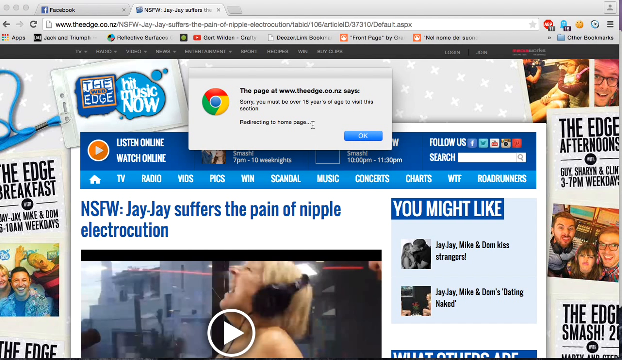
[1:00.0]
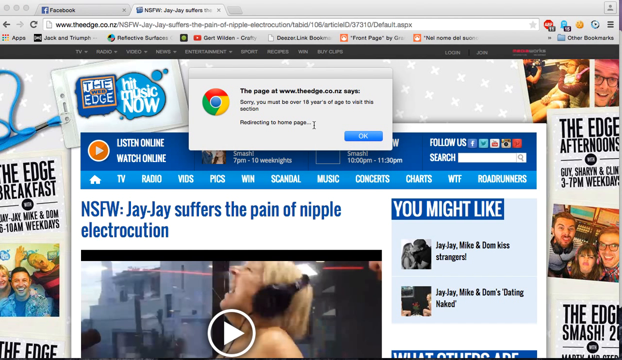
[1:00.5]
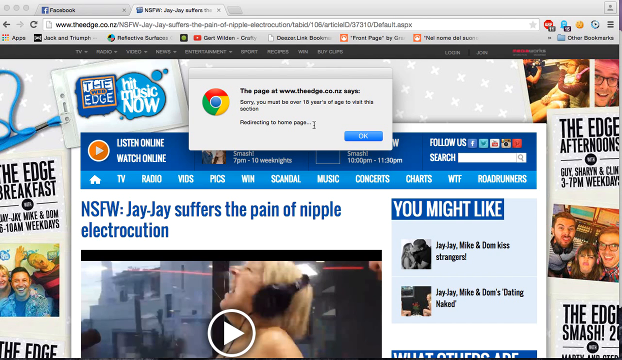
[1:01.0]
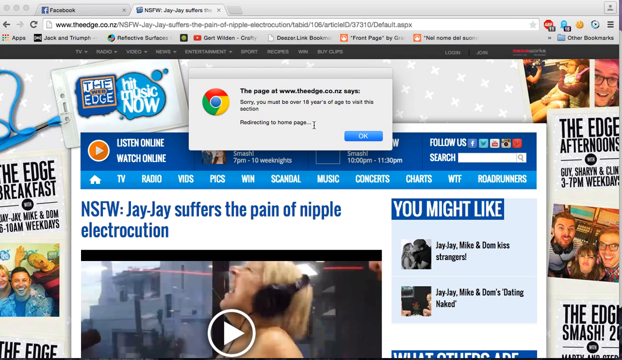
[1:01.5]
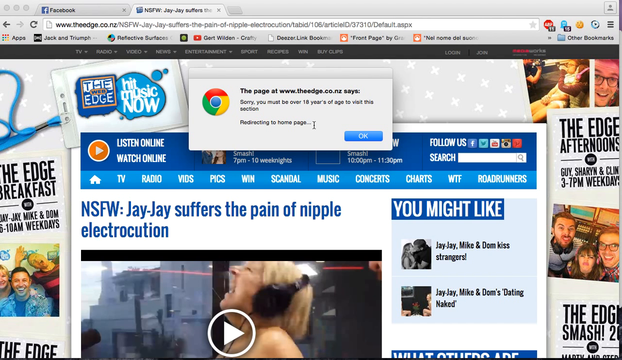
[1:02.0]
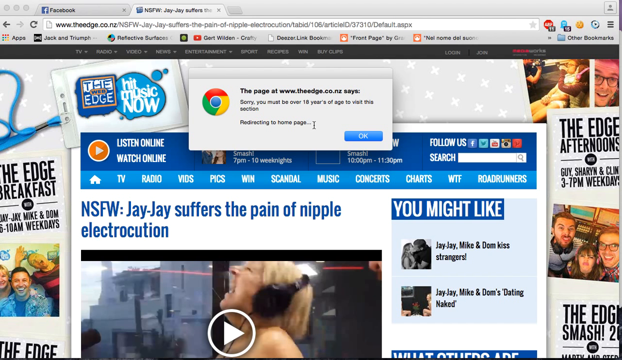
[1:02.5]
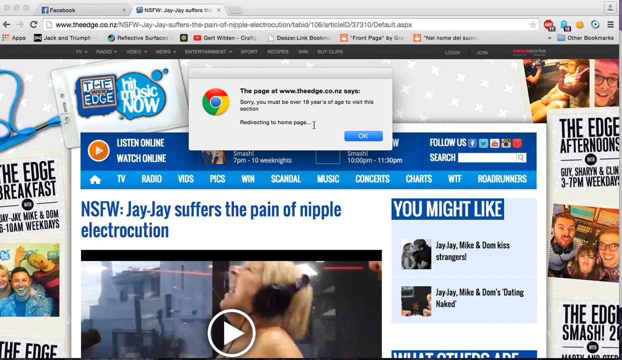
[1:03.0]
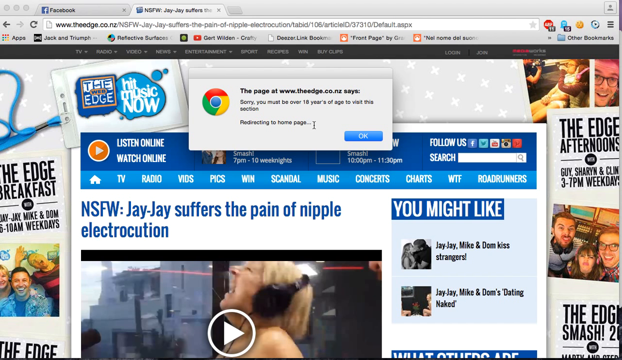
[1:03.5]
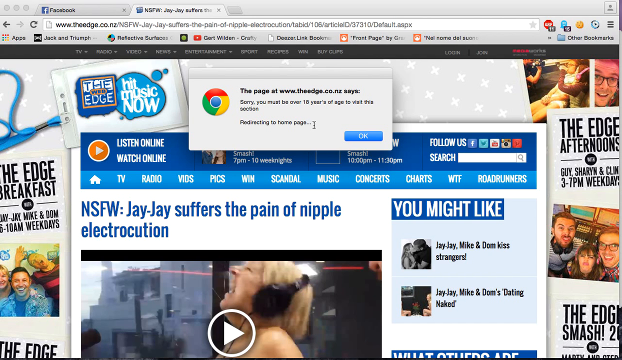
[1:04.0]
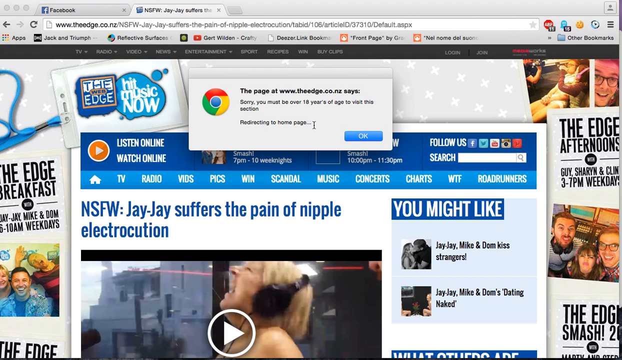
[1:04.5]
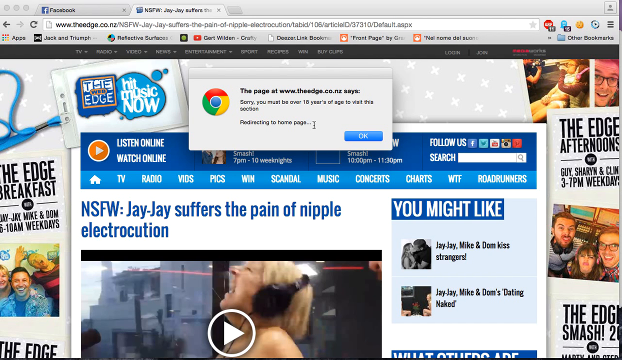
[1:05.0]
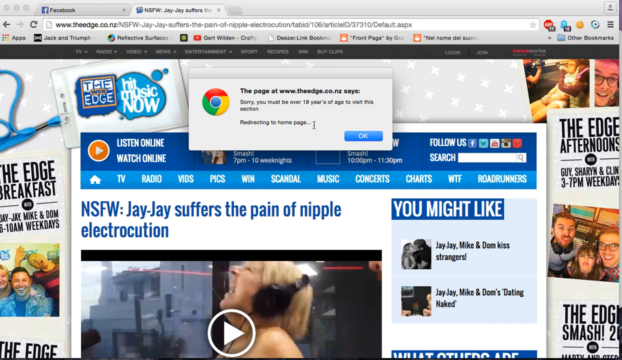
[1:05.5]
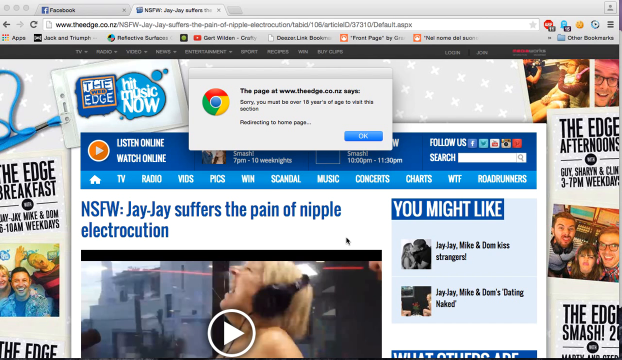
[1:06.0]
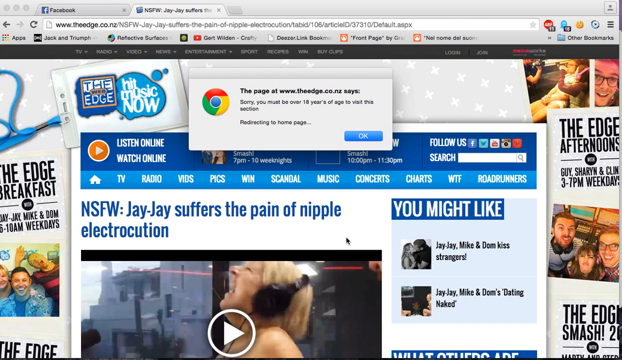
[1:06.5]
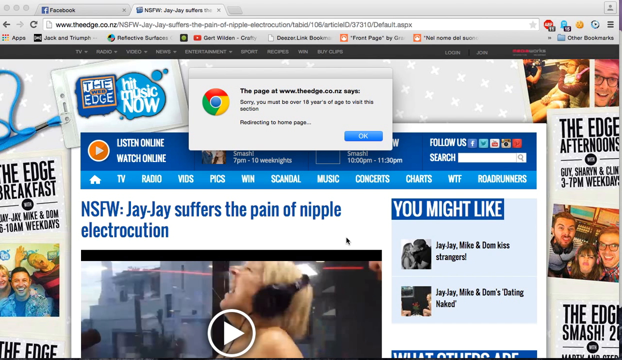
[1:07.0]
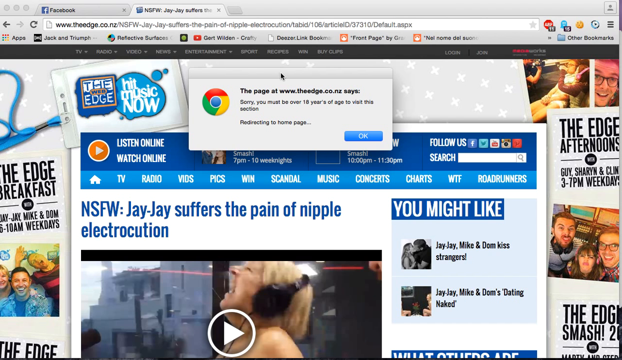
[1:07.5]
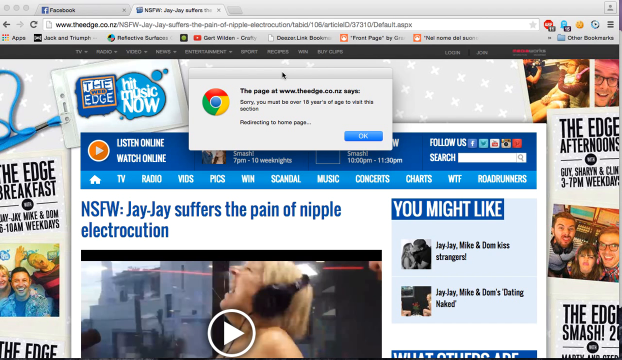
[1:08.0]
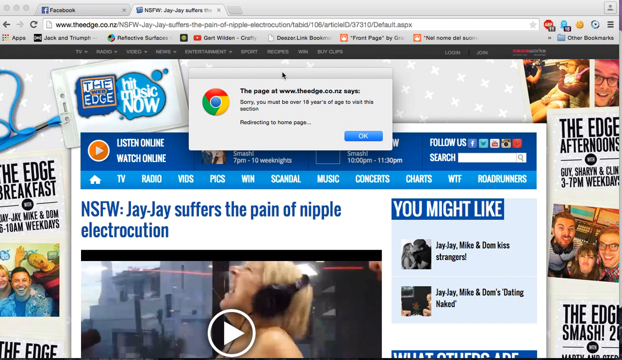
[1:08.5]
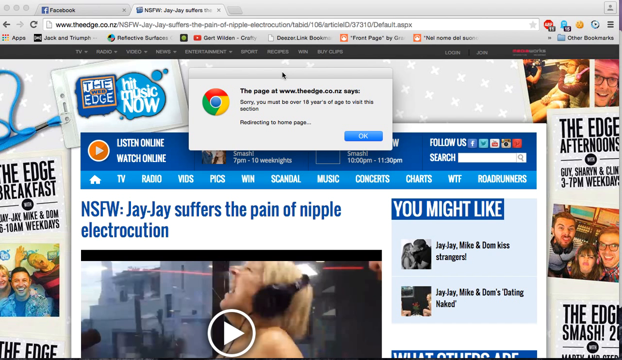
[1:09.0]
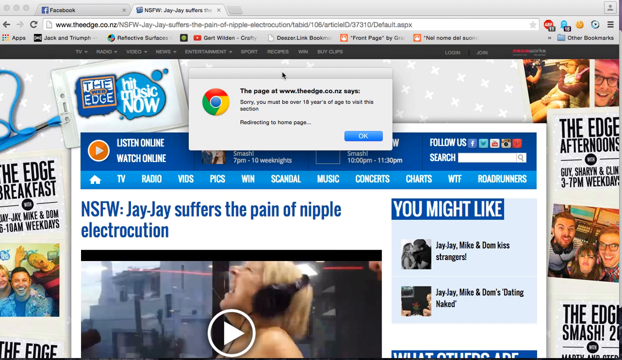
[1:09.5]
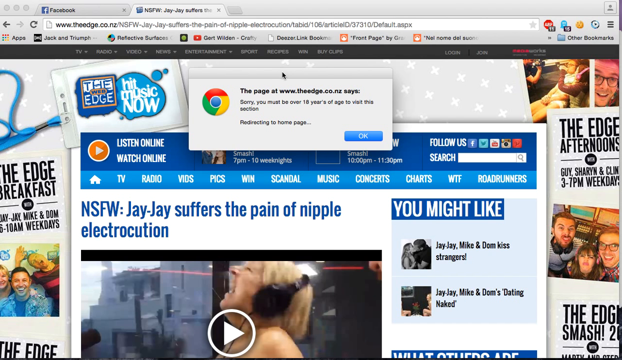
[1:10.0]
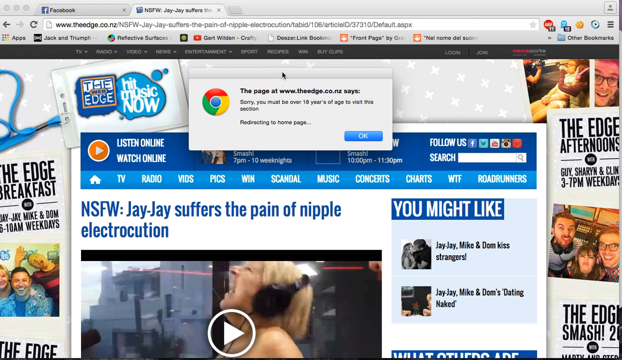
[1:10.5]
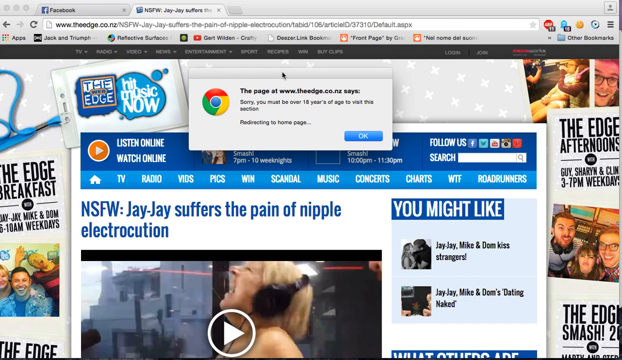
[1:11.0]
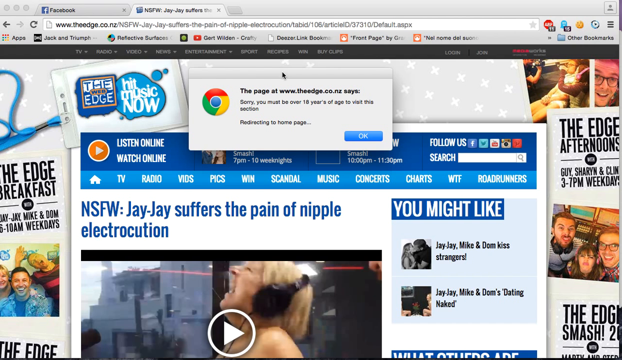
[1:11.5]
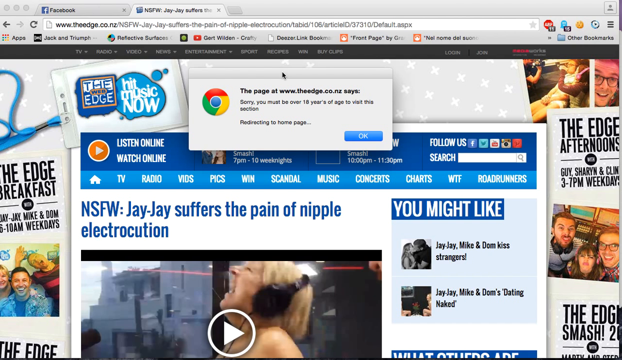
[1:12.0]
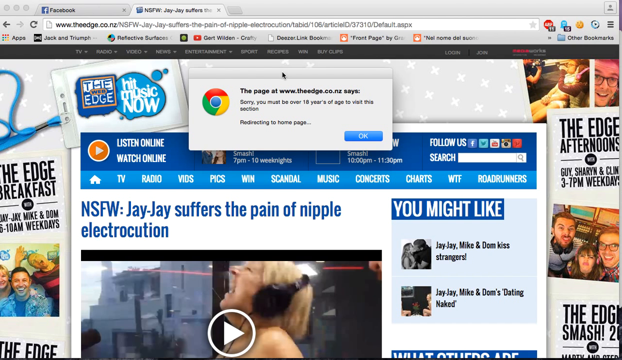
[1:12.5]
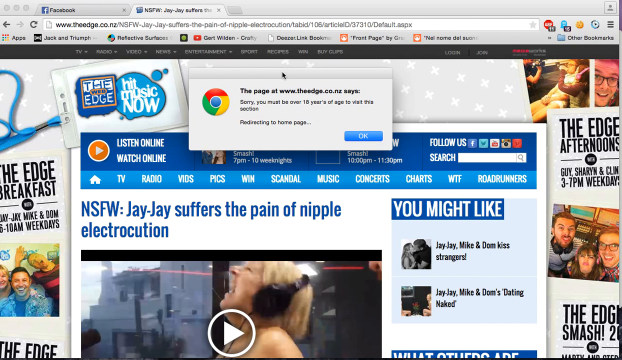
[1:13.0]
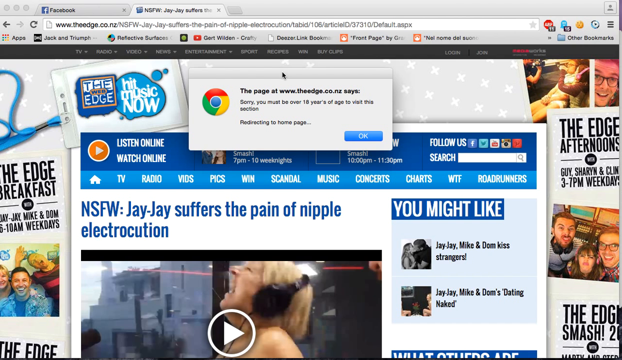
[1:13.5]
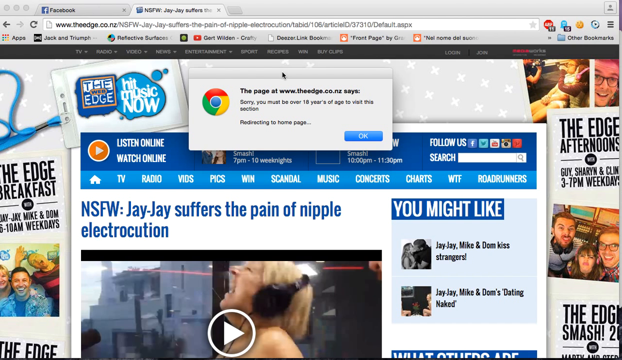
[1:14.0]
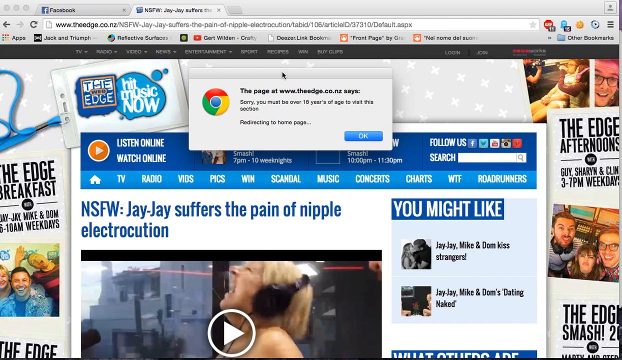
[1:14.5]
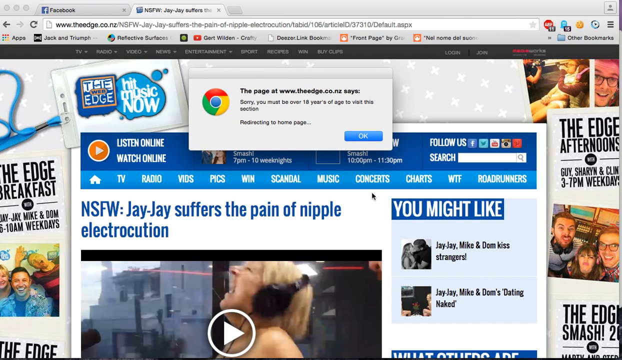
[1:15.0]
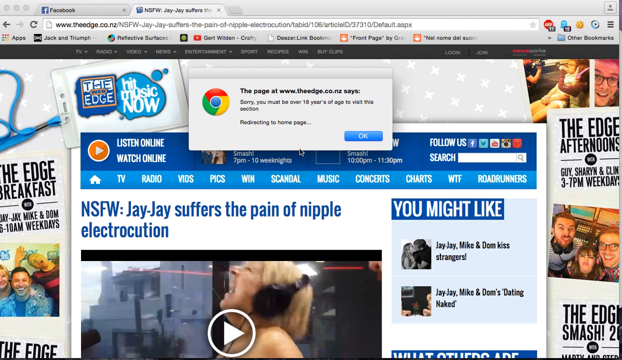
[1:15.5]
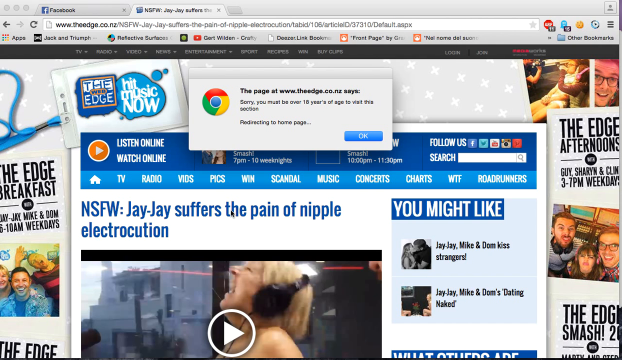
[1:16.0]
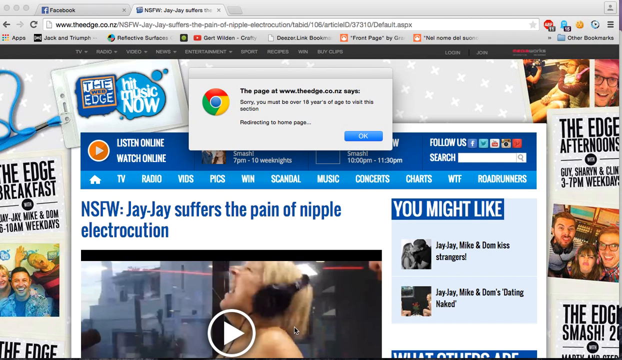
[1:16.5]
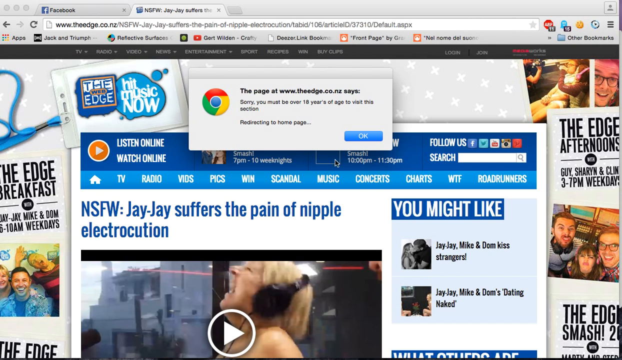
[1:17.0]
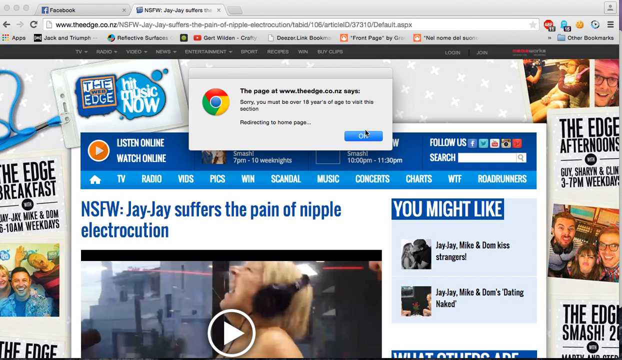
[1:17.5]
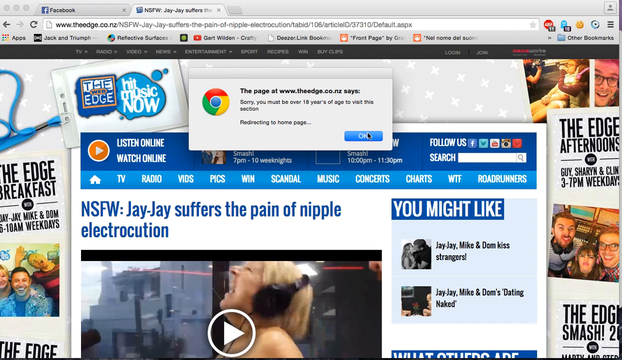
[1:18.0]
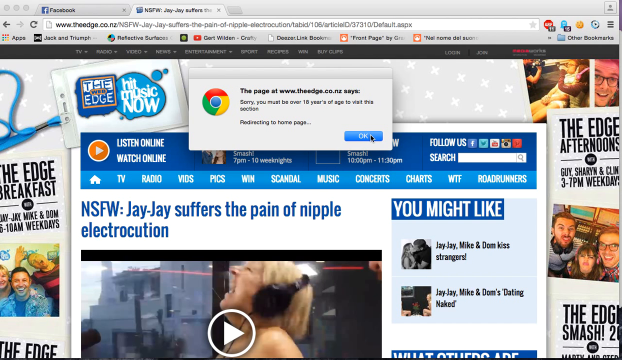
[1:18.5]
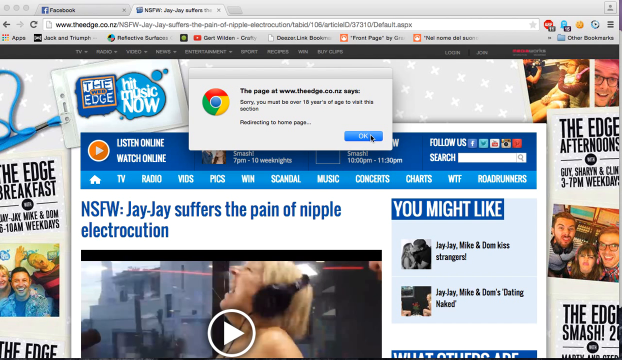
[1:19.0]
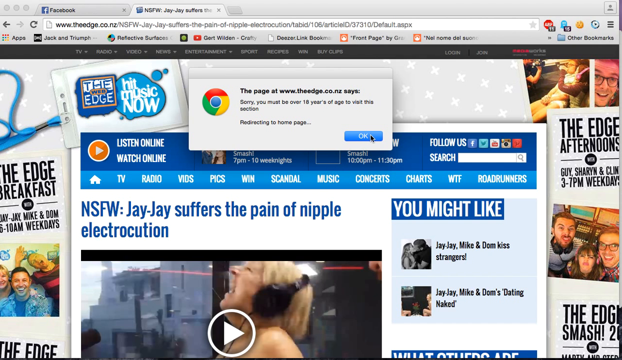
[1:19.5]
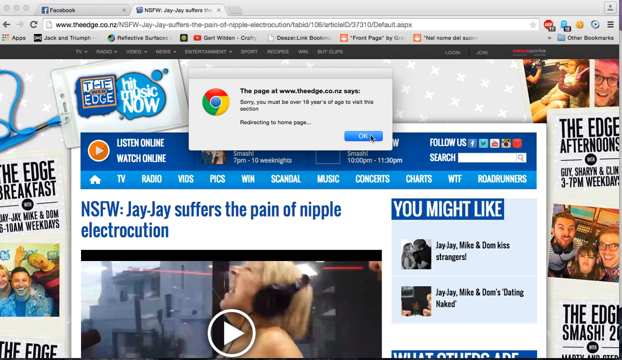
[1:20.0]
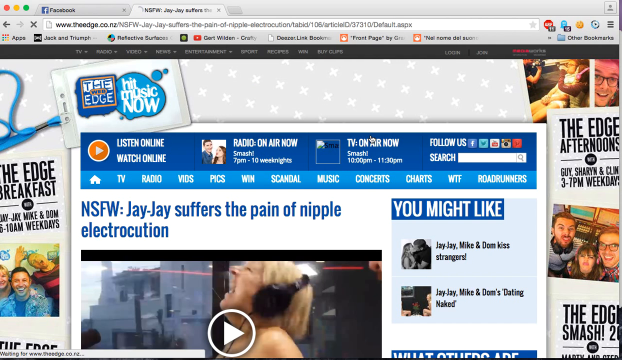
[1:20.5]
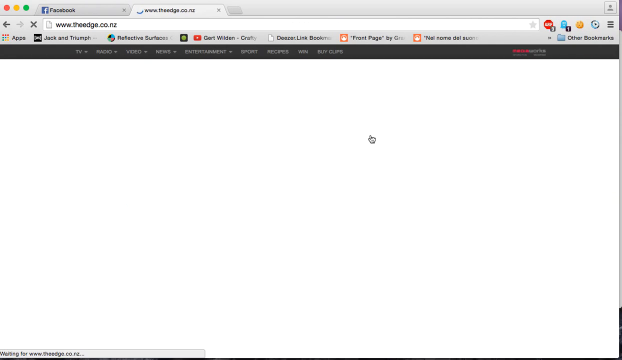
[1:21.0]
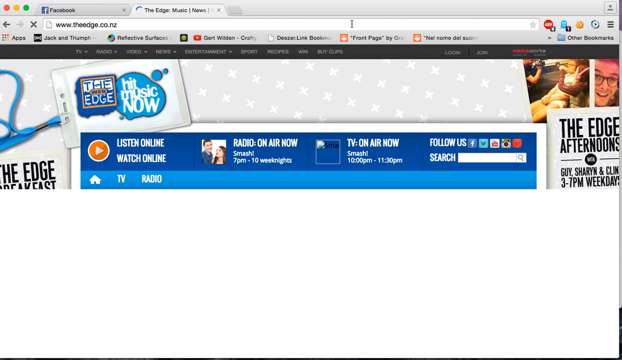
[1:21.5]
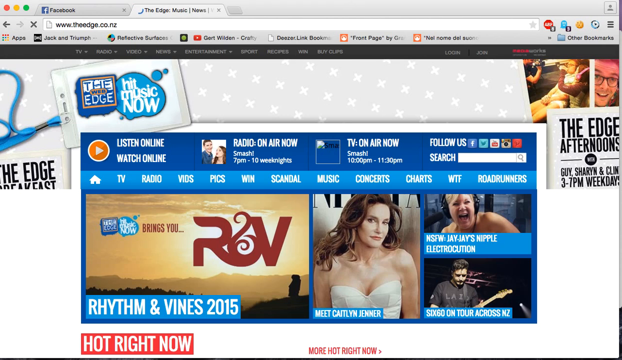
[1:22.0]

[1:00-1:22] An internet user looks at a web page from the Edge Hit Music Now entertainment group. In front of the page is a notification stating that they do not have access to certain content, with only the option to click OK to dismiss it. Instead, the user moves the mouse around the area of the notification, above it near the address bar and below it near the content they were previously watching. The user then refreshes the page rather than accepting the notification; this works temporarily until the notification pops back up and must be dismissed to proceed. On the page is a video titled "JJ suffers the pain of nipple electrocution". On the right are suggested videos titled "You Might Like", with other information about the artist JJ.